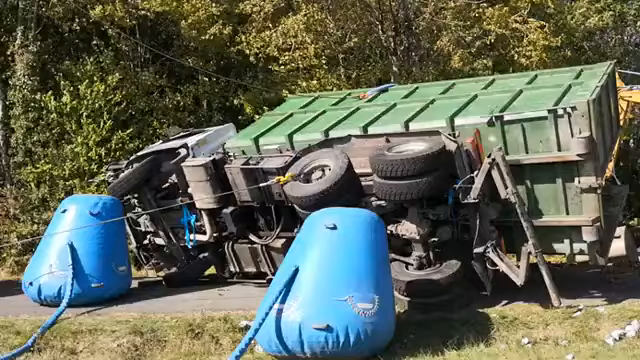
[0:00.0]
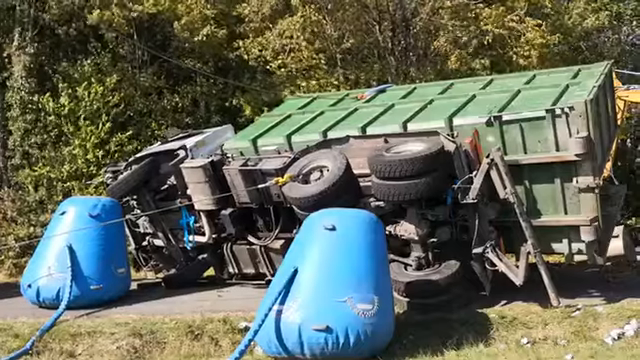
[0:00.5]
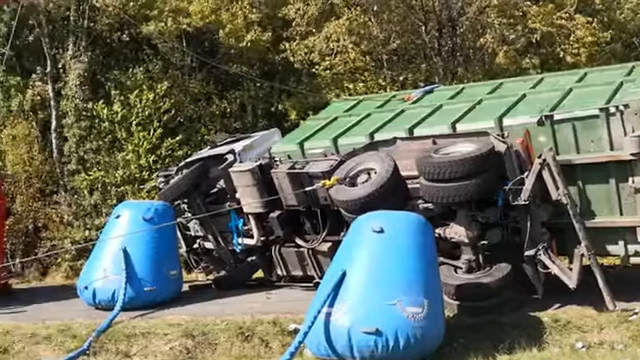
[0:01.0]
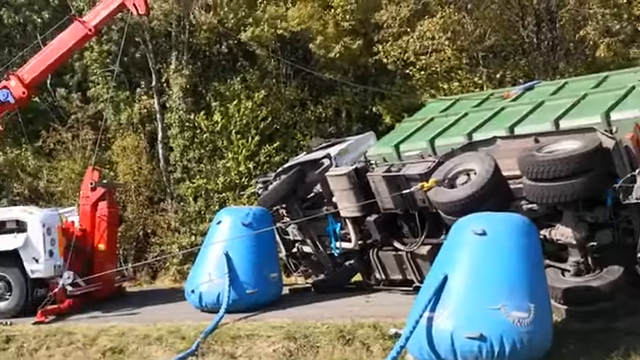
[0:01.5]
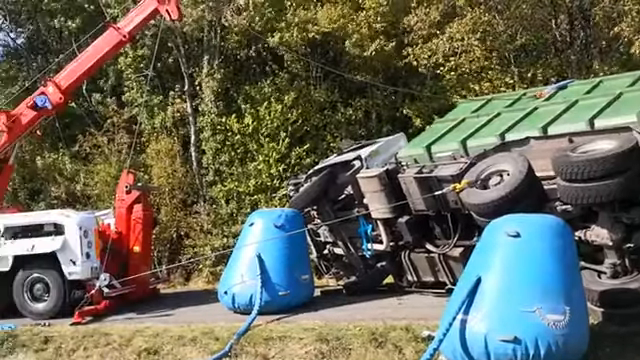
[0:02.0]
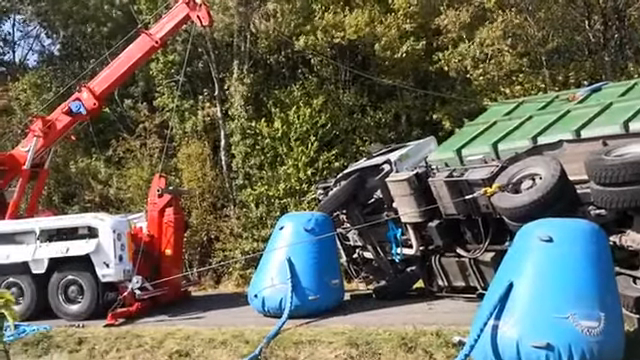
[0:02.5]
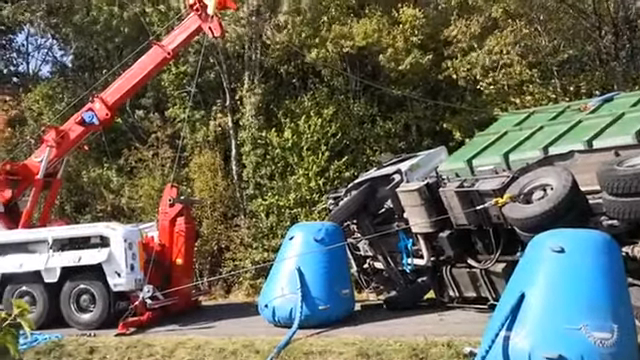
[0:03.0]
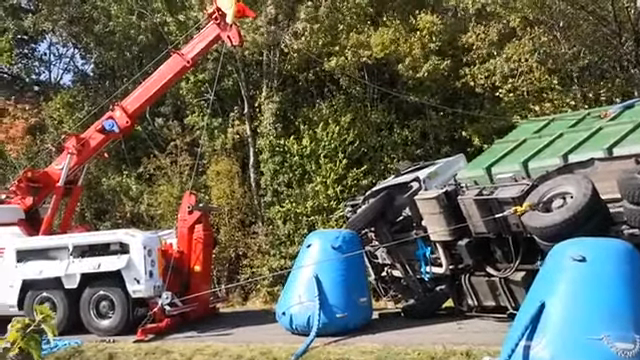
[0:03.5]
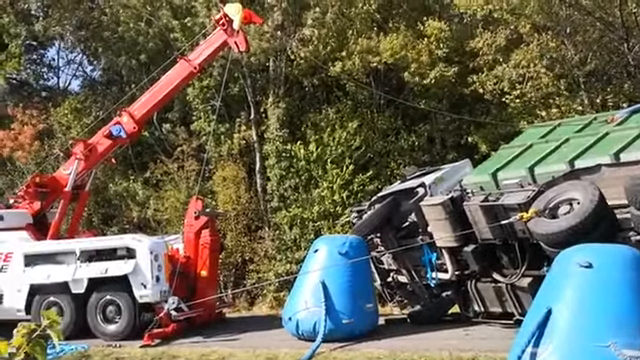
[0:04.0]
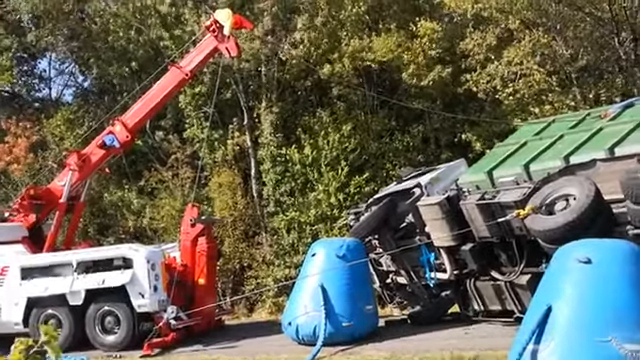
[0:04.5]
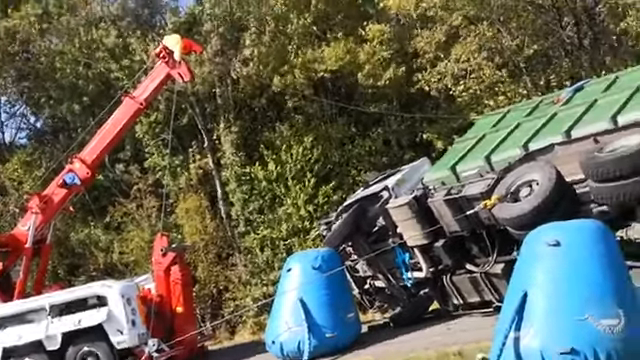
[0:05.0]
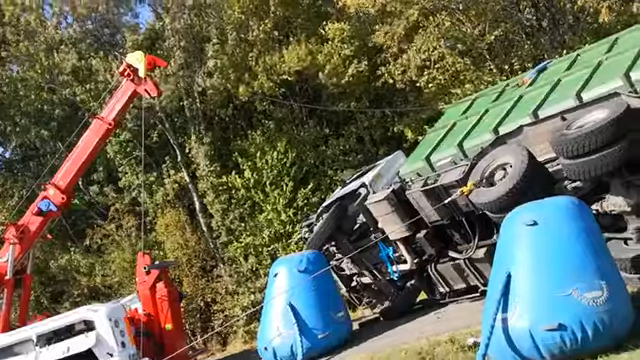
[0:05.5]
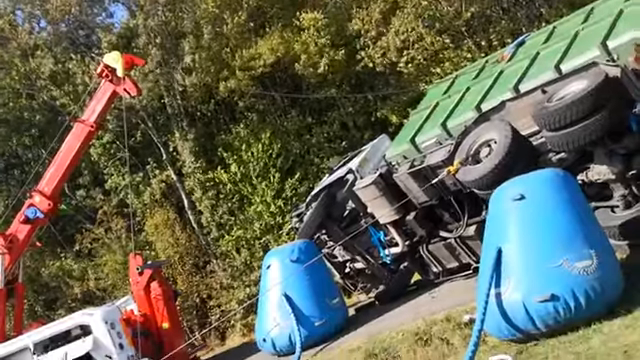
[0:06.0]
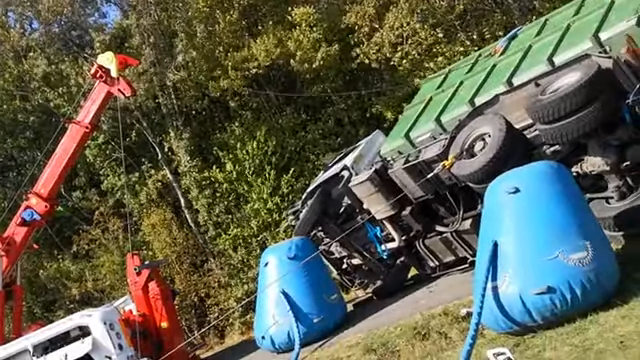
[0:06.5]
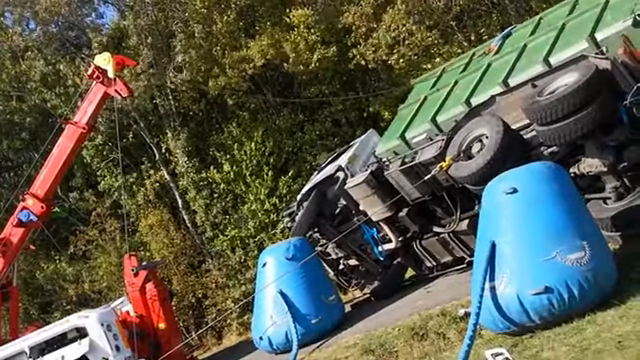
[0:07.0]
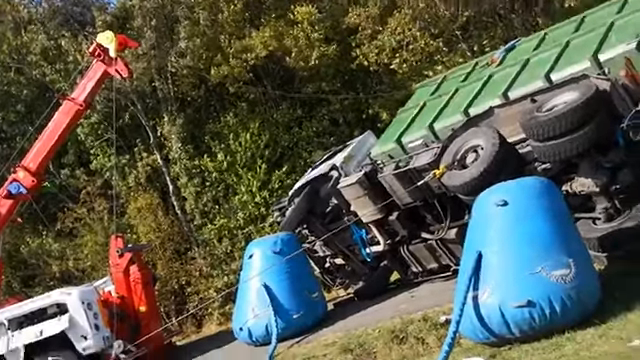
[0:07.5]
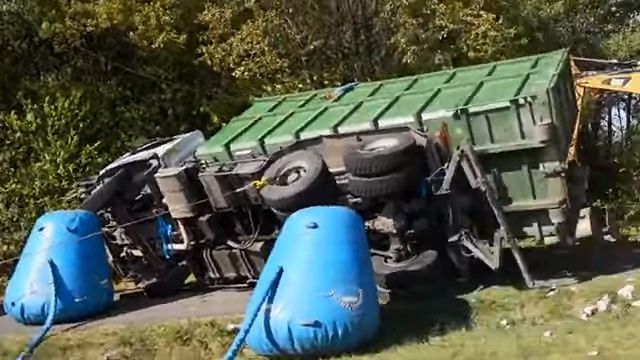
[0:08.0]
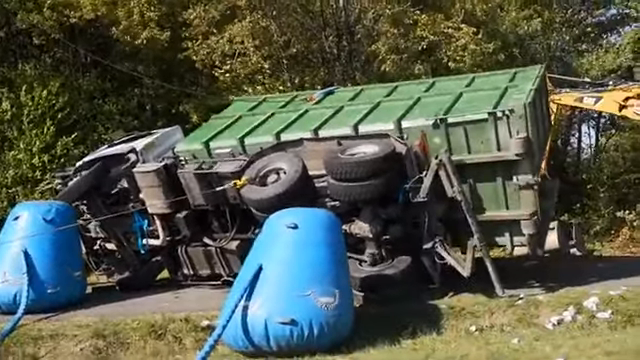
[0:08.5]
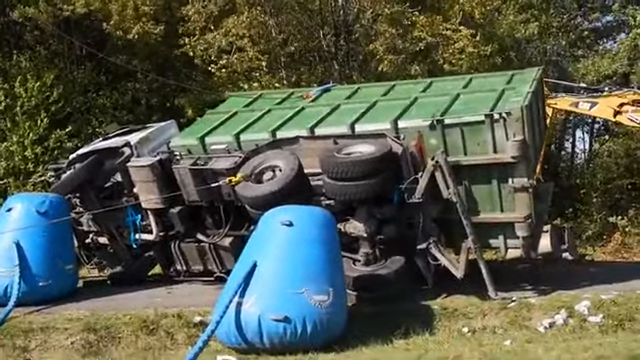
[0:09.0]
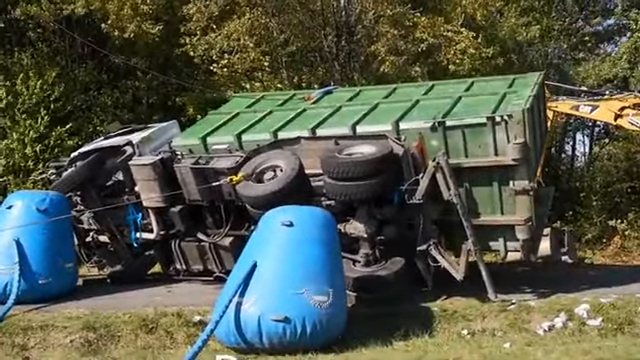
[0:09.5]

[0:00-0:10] An overturned truck lies on its right side. Its bed is green and looks like a green dumpster, the cab is white, and it has double tires. There are two blue objects that look like blow-up buoys. A crane with a red arm has different wires attached to the truck, and it seems to be starting to lift the truck to right it, though the truck is still lying on its right side. Behind the truck there appears to be a Cat excavator or some kind of Cat equipment.